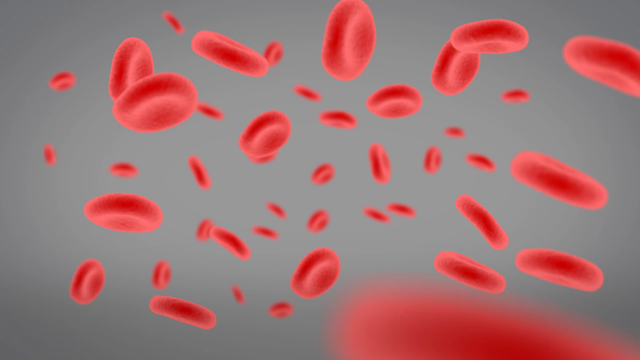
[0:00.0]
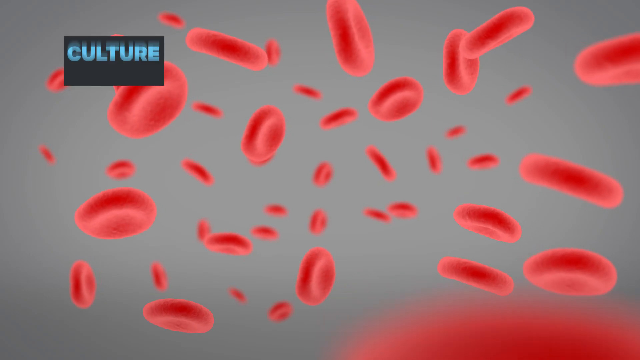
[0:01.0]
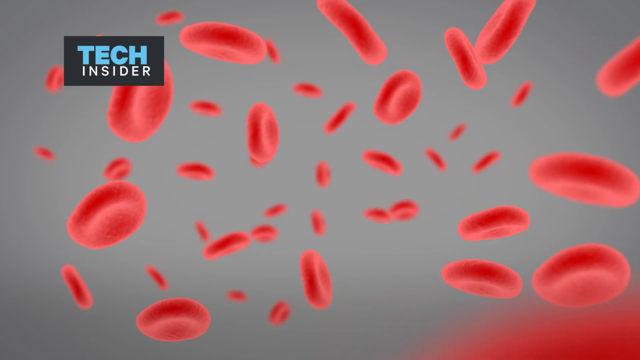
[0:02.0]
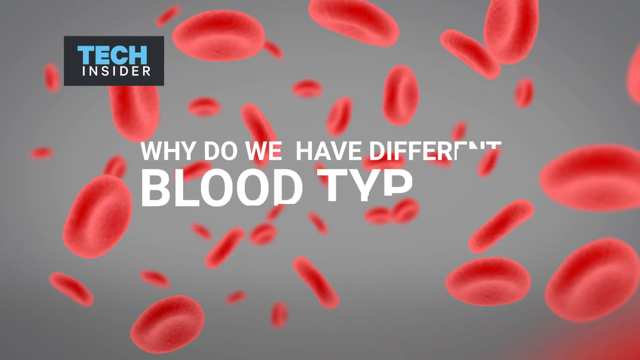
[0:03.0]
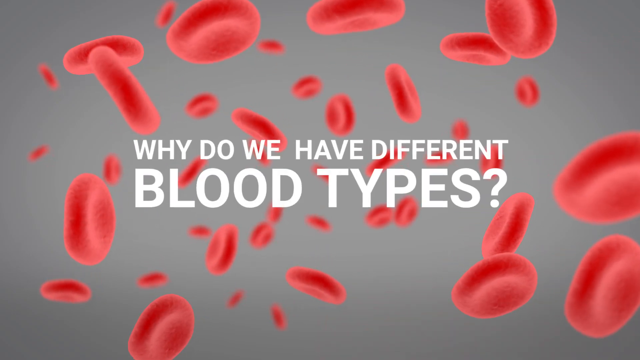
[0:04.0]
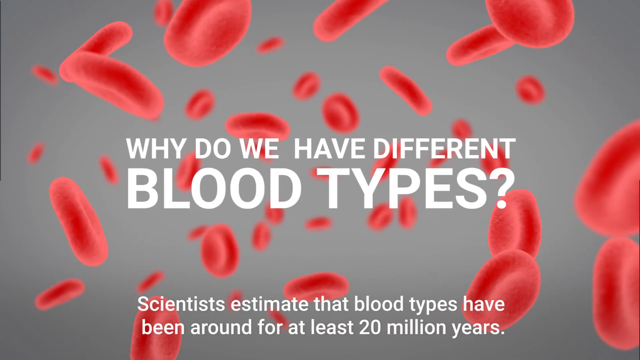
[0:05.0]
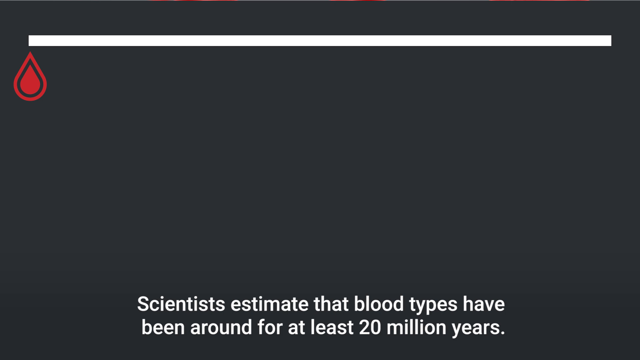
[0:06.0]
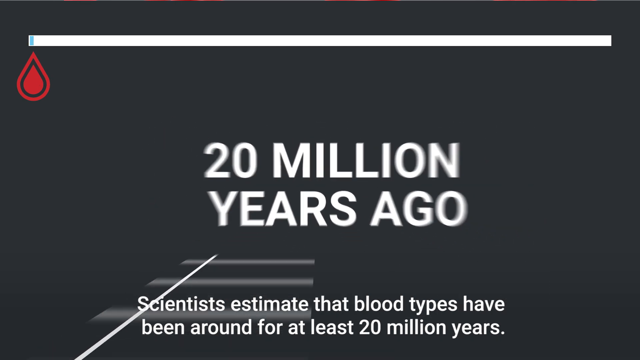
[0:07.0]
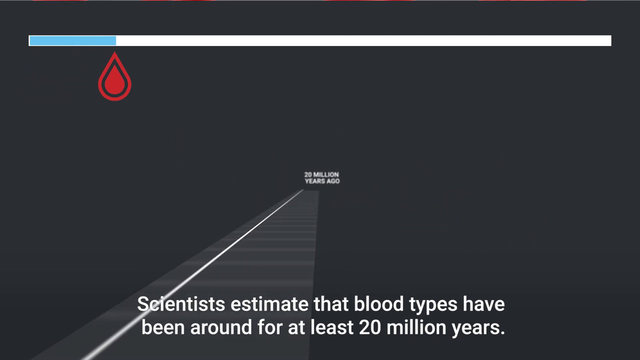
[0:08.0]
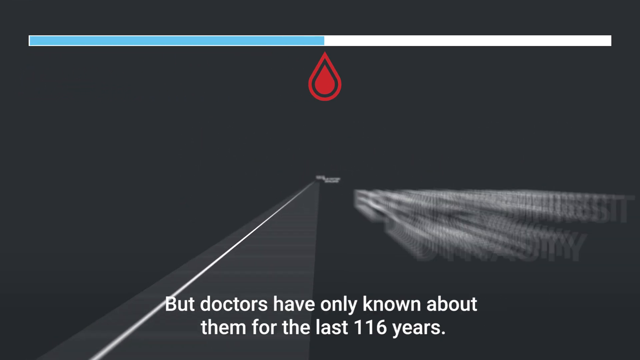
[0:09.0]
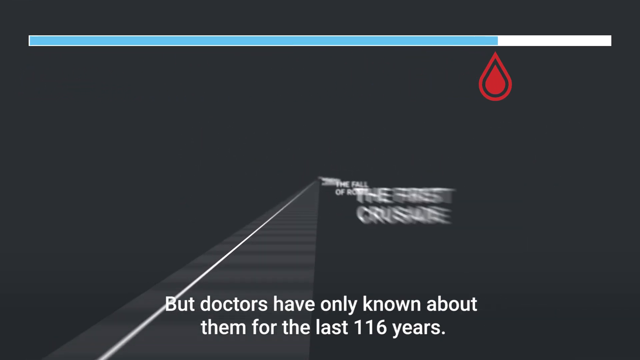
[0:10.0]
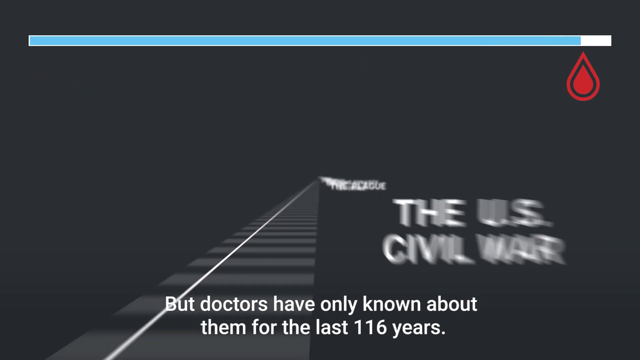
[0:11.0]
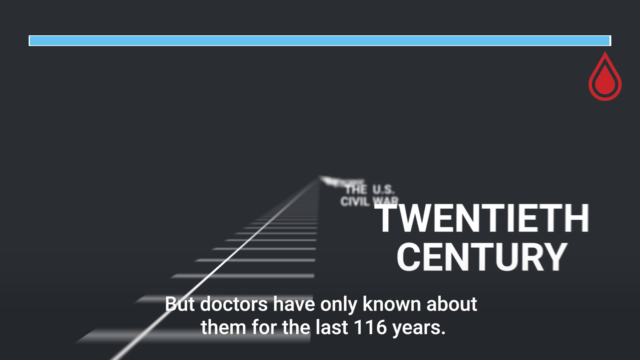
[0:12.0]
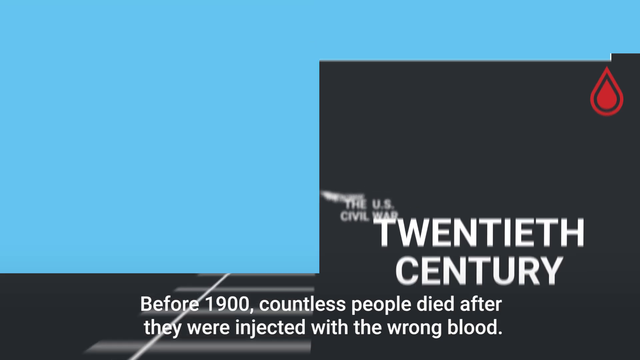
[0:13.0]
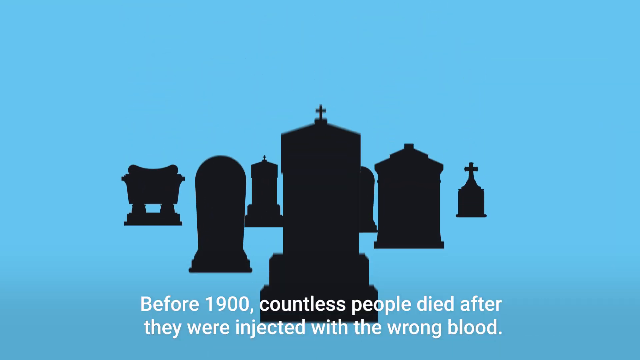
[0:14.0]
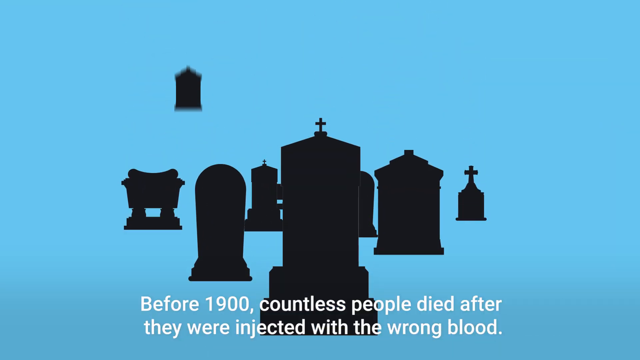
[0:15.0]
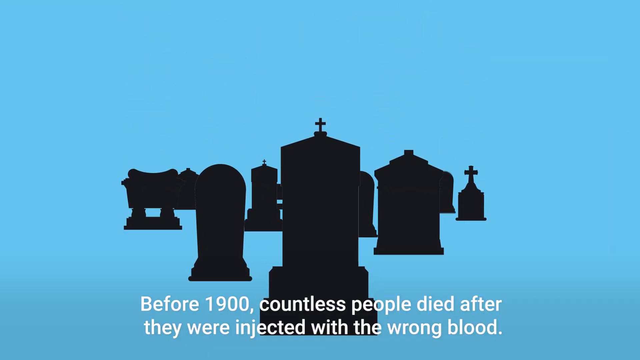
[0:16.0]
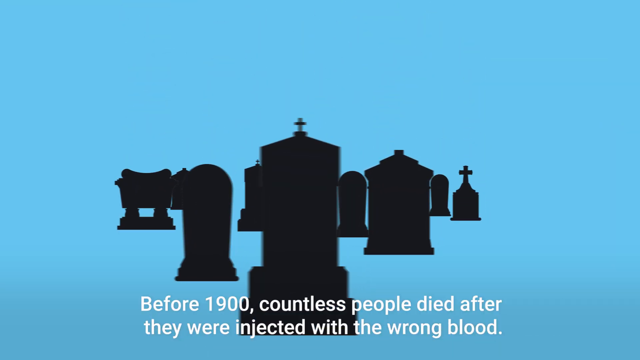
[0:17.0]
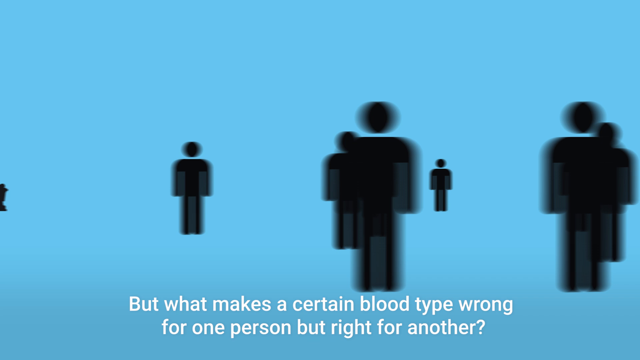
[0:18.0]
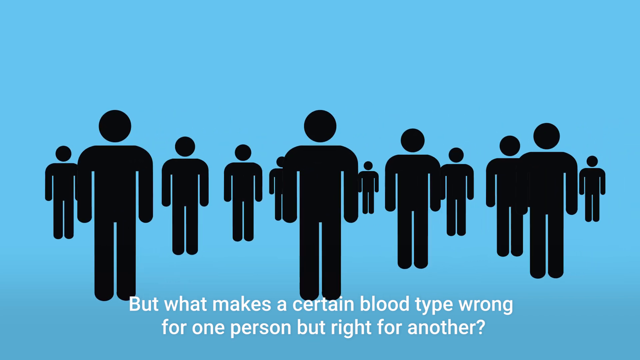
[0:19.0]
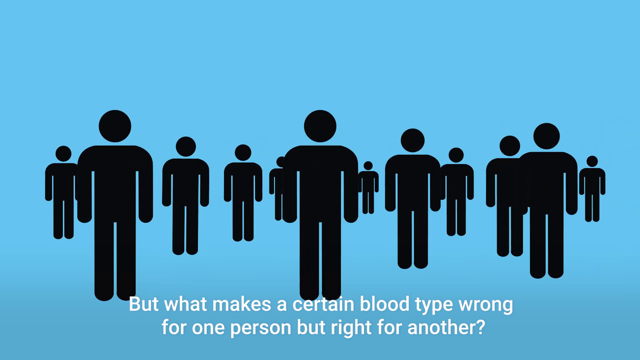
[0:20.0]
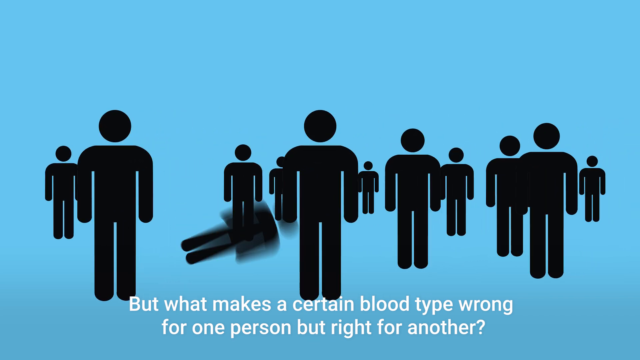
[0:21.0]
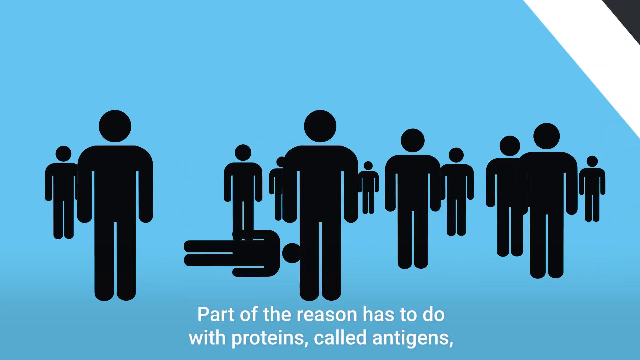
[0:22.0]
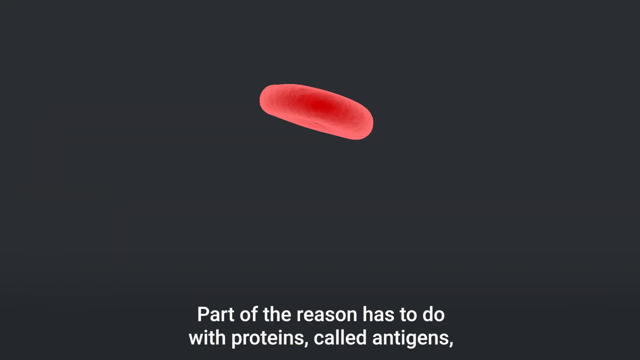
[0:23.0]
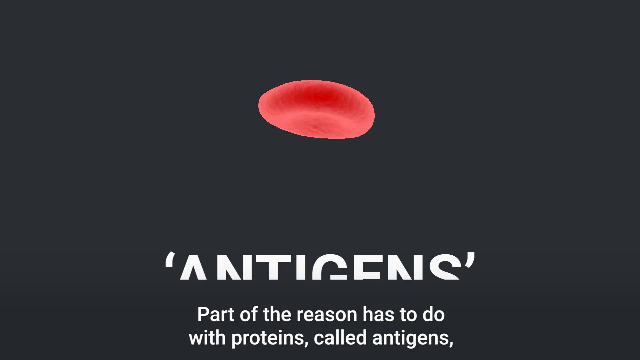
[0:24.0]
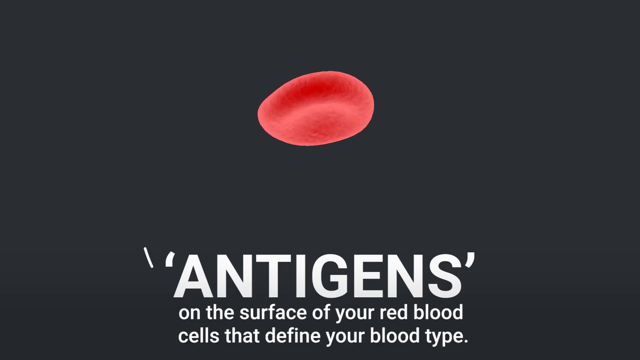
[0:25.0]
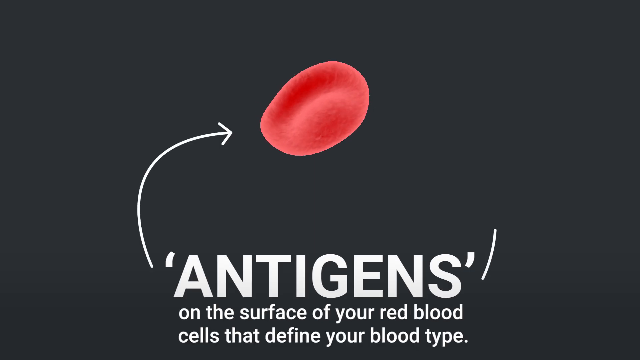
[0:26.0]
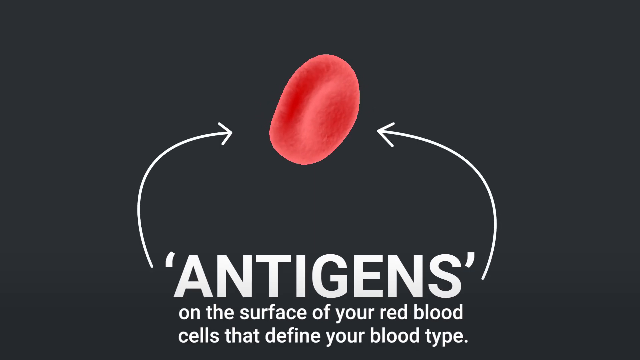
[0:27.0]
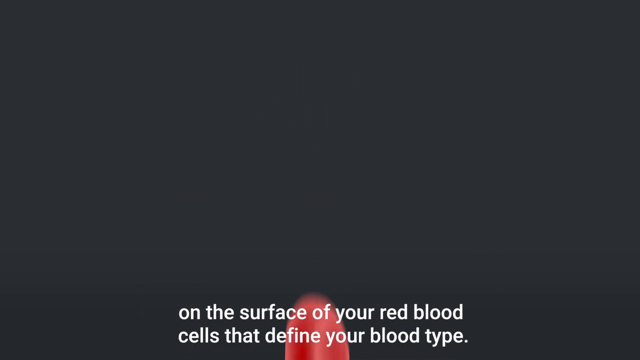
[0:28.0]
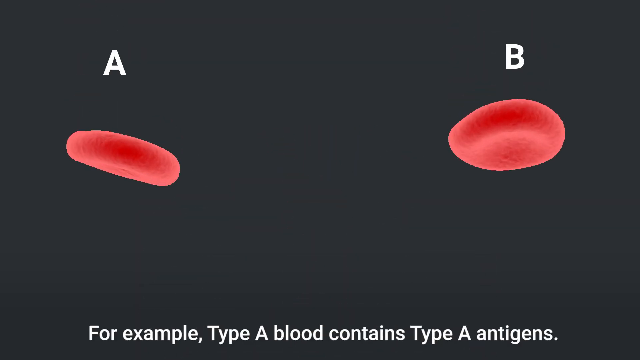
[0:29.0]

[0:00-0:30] An animation shows a bunch of blood vessels floating in a gray space; basically all of them are kind of twisting around and floating, as if in zero gravity, against a gray background. Text in the middle reads "why do we have different blood types?" and subtitles at the bottom say "scientists estimate that blood types have been around for at least 20 million years." Text in the middle then reads "20 million years ago," followed by a bunch of sort of historical events laying out the amount of time that has passed, the most recent being the 20th century. More text at the bottom says "before 1900, countless people died after they were injected with the wrong blood," and a bunch of gravestones are shown. Next the text says "but what makes a certain blood type wrong for one person but right for another?" Many stick men are shown kind of standing there, and then one is shown that has basically keeled over and died.